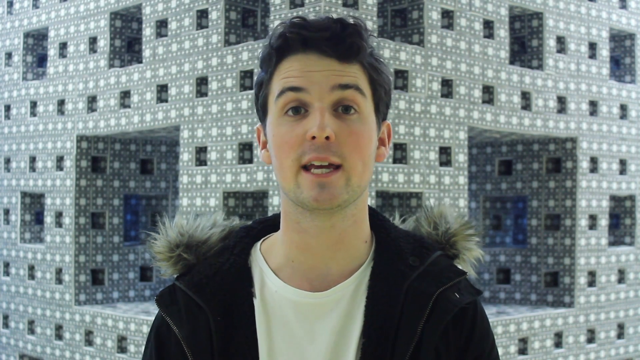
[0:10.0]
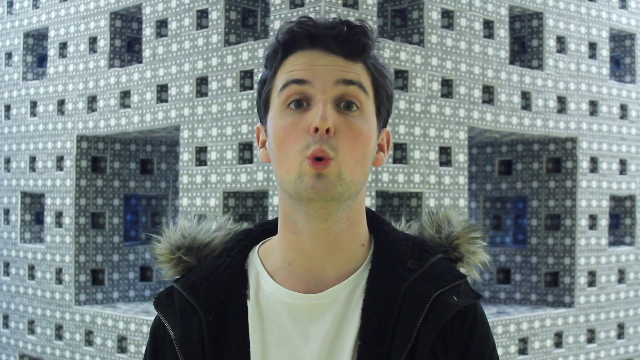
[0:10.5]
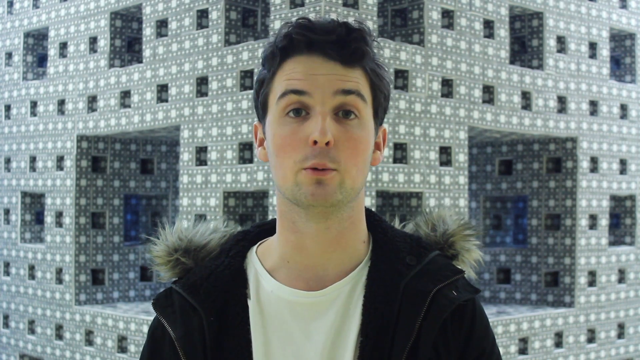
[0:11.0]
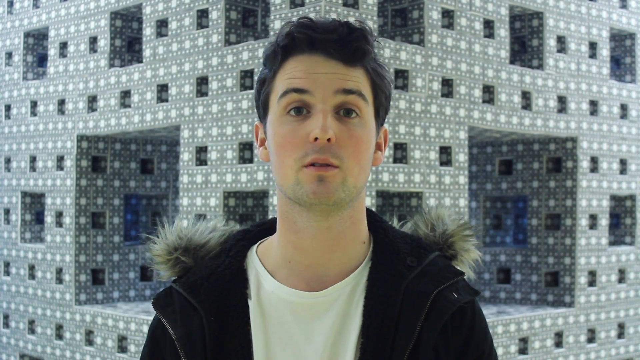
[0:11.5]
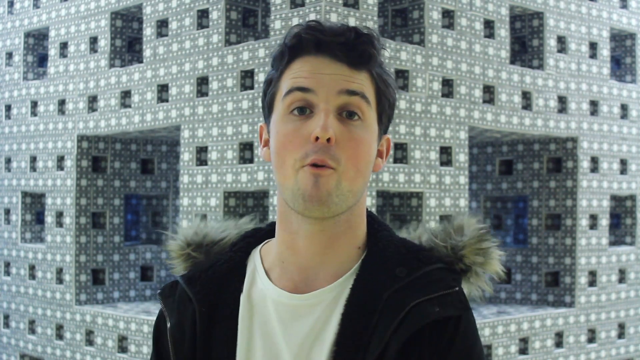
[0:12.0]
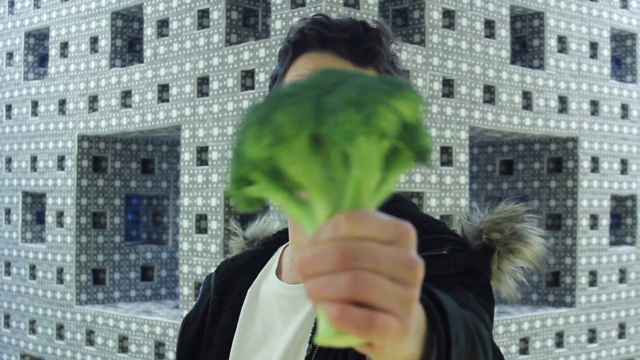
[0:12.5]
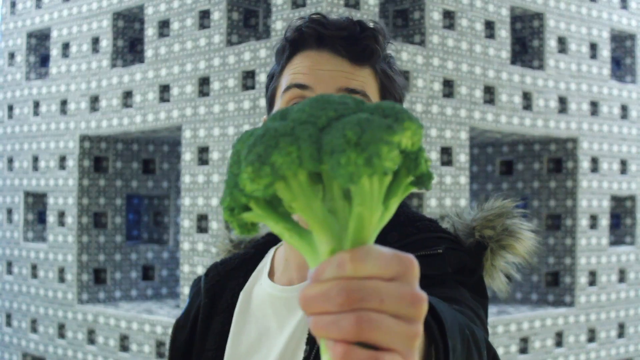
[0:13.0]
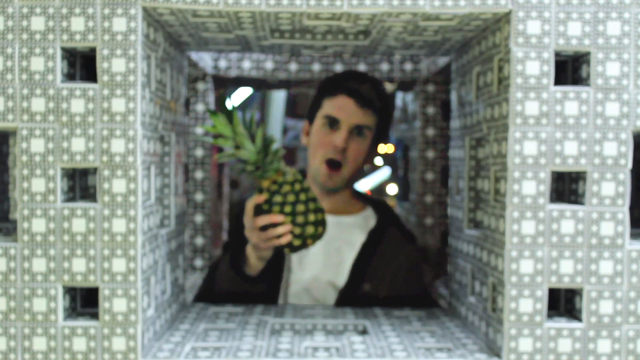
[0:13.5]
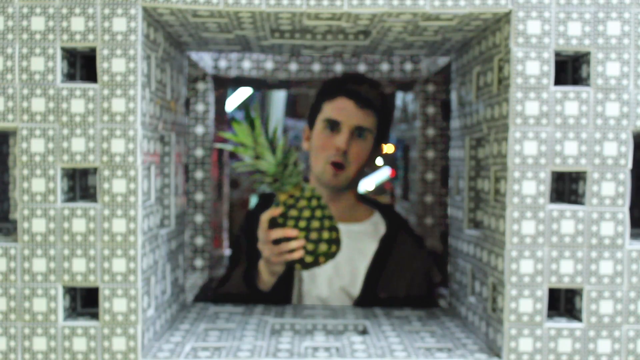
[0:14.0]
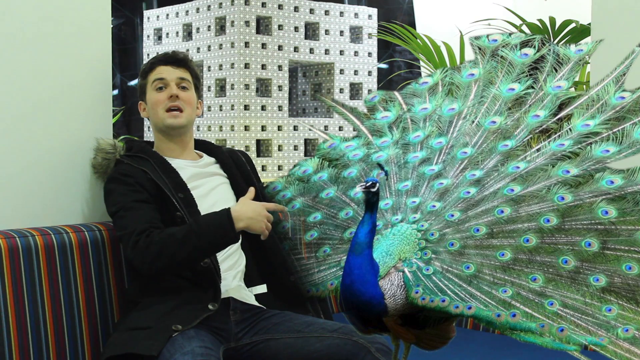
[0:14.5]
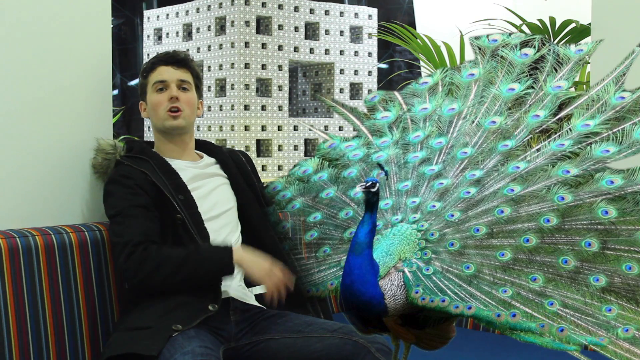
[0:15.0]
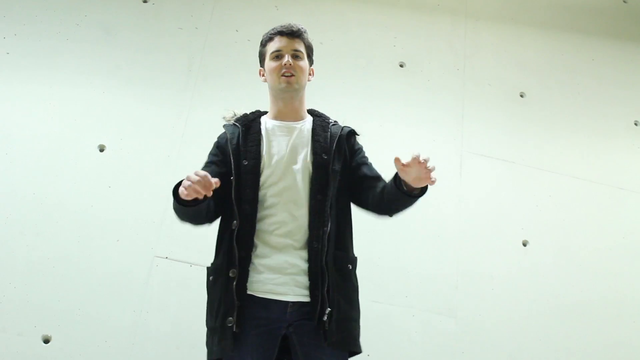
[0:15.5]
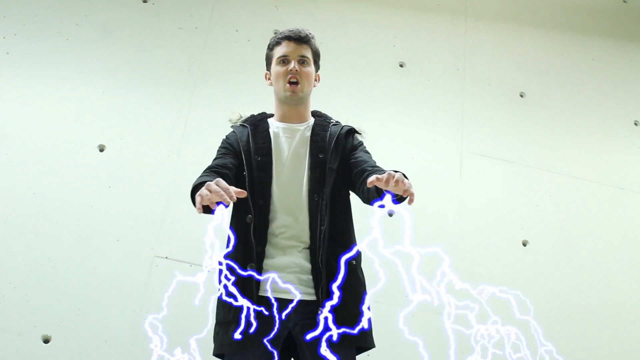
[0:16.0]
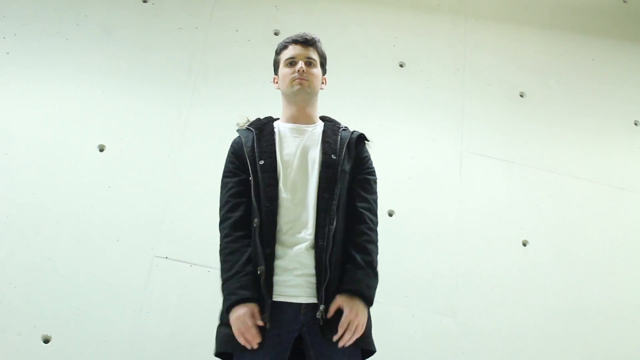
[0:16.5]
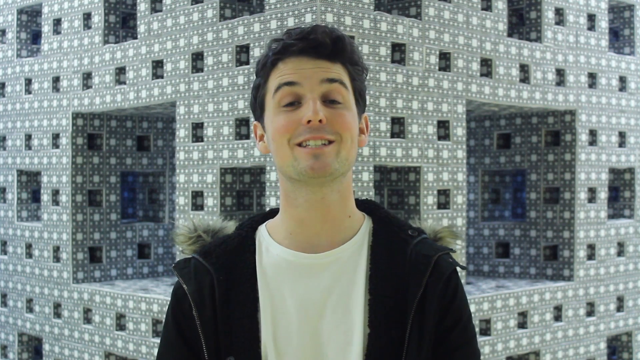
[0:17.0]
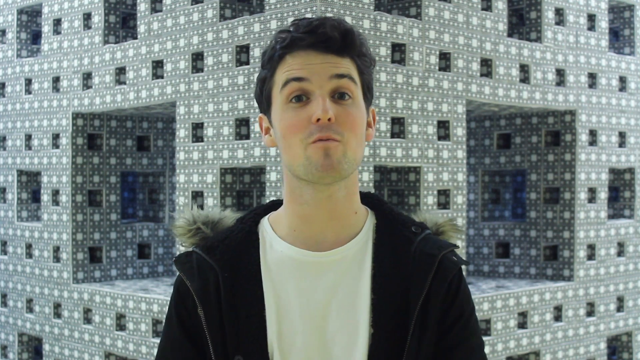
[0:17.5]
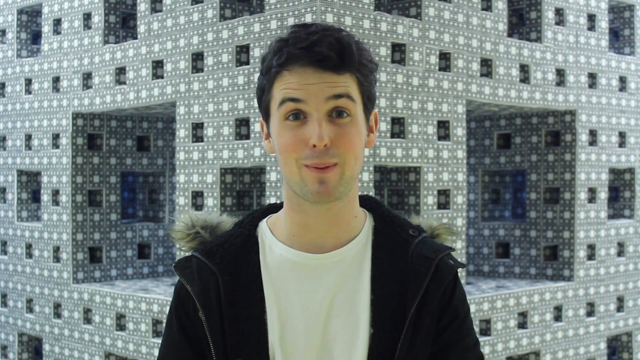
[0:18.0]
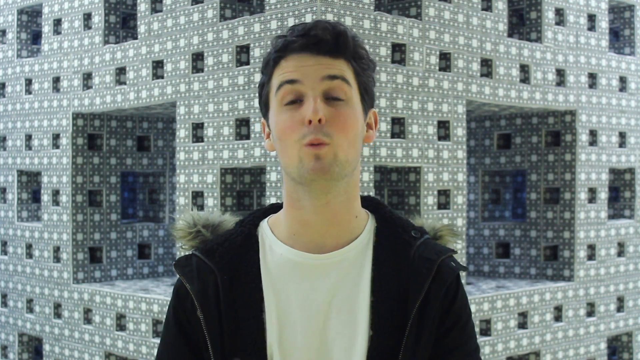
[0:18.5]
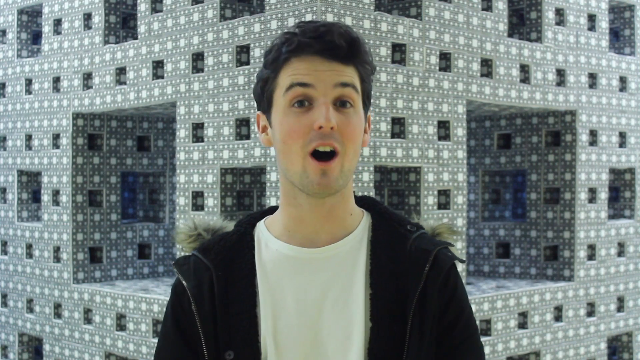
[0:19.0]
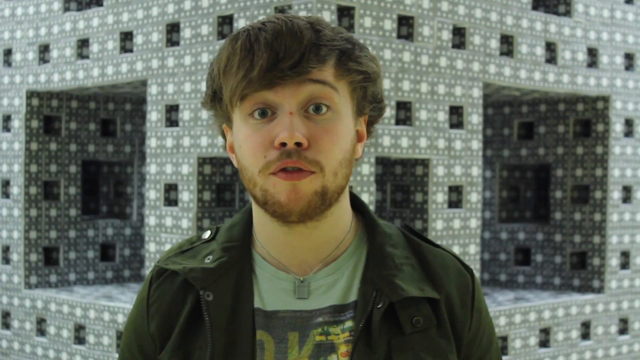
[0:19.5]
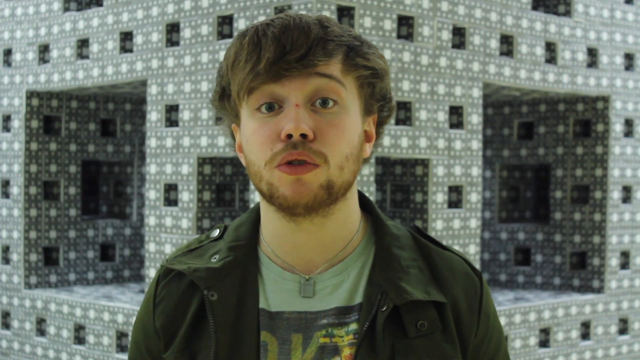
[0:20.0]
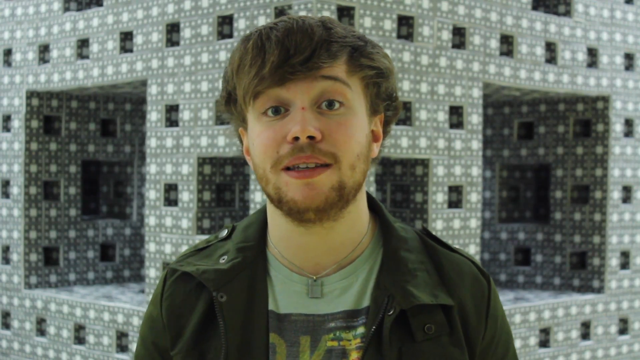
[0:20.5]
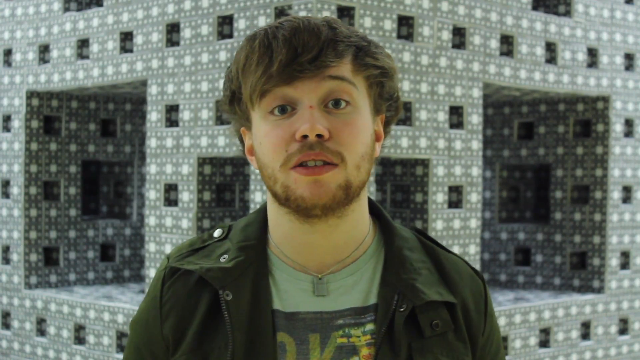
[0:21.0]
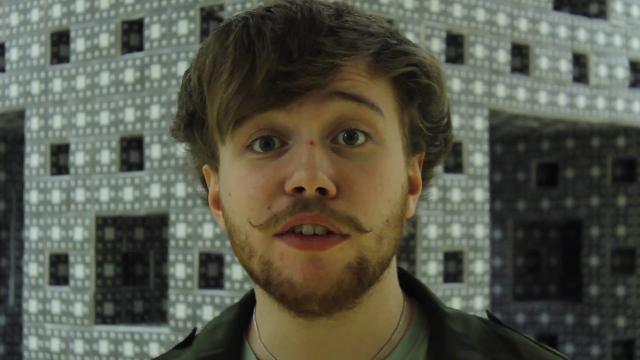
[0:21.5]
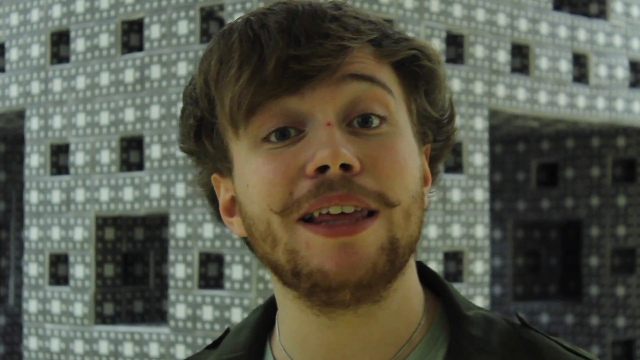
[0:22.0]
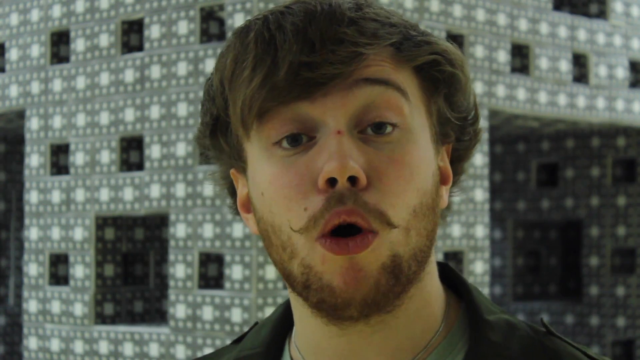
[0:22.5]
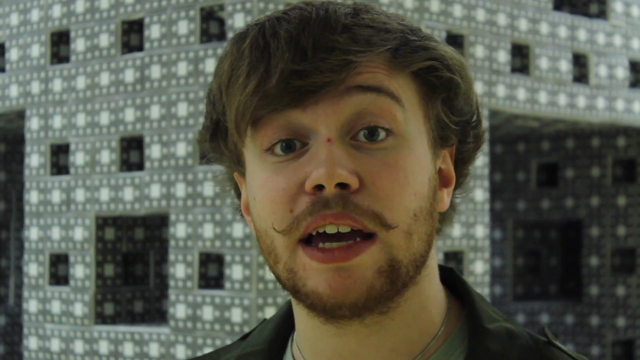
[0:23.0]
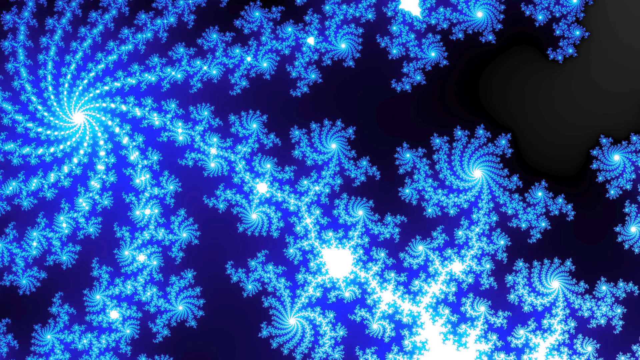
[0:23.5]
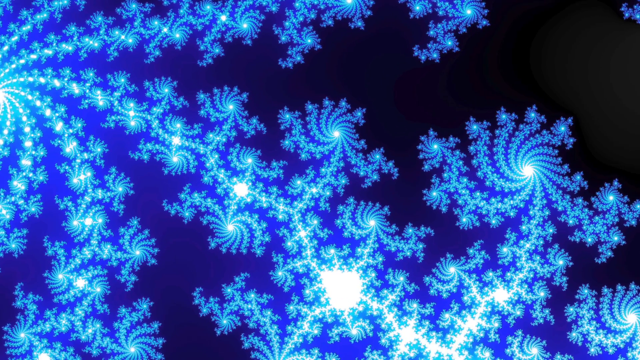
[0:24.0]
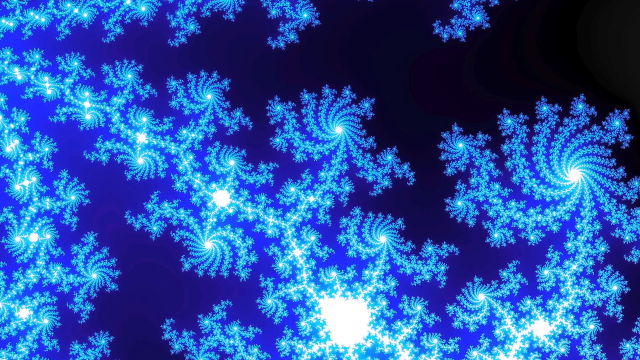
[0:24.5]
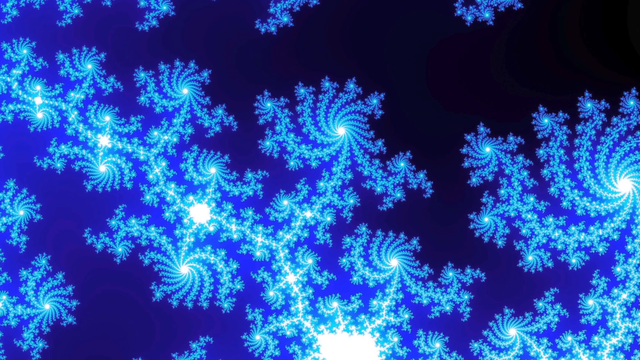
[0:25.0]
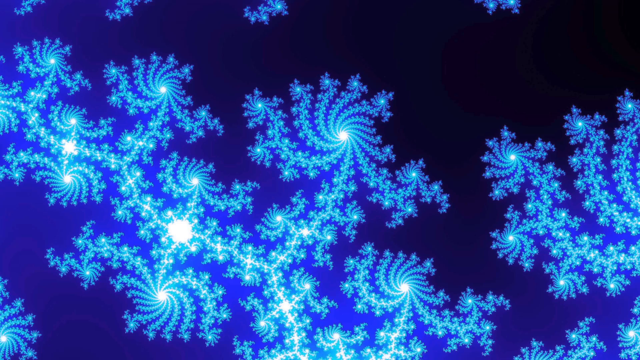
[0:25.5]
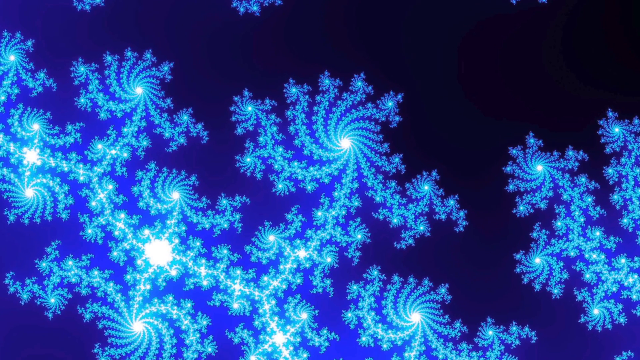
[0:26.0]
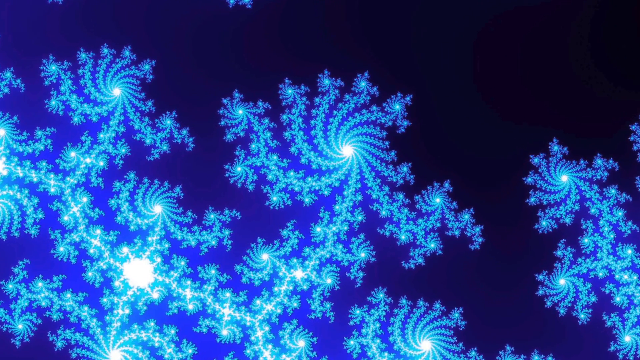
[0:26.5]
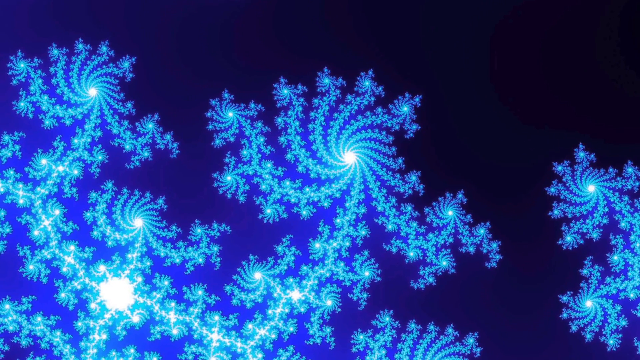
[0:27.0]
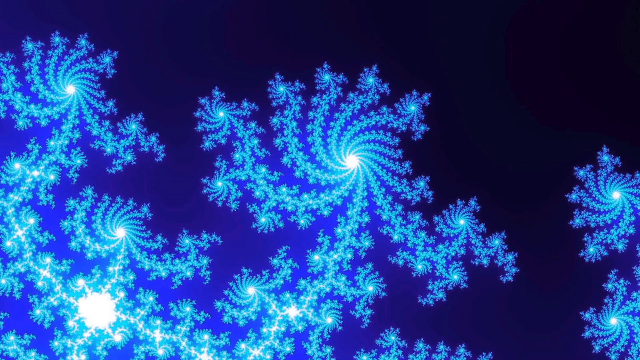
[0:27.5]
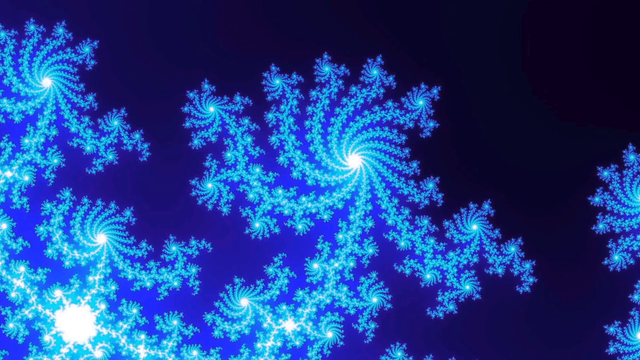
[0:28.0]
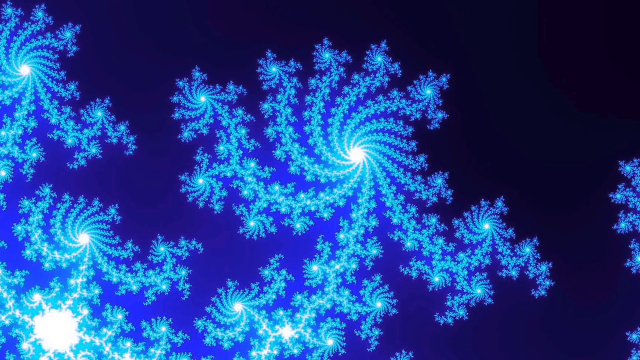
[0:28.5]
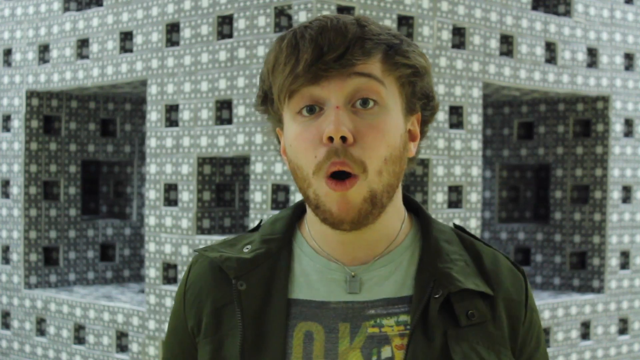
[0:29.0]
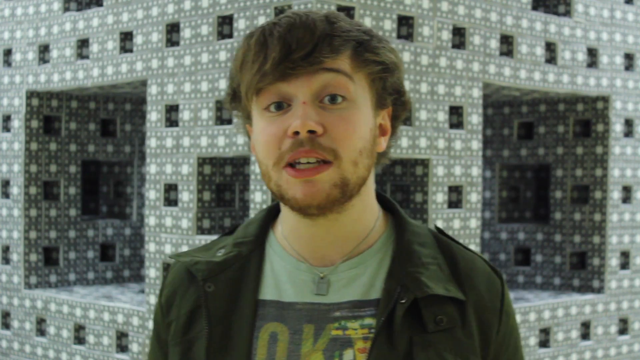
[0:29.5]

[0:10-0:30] A pineapple appears with some effects involving the sun, and a peacock also shows up. A different man, with a beard and a mustache and wearing a green overcoat, appears. There is a green-blue effect with a touch of golden crystals, and a blue-black effect.